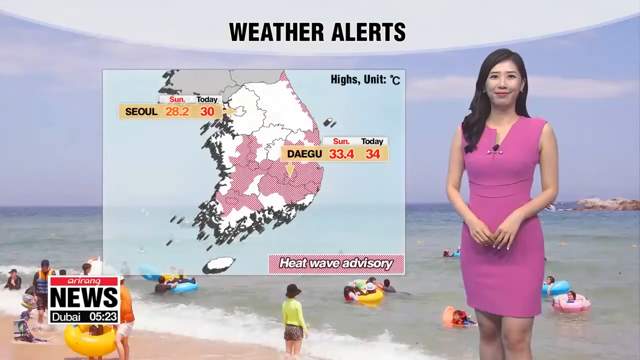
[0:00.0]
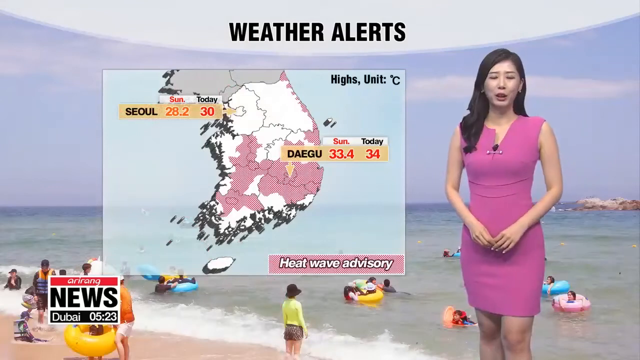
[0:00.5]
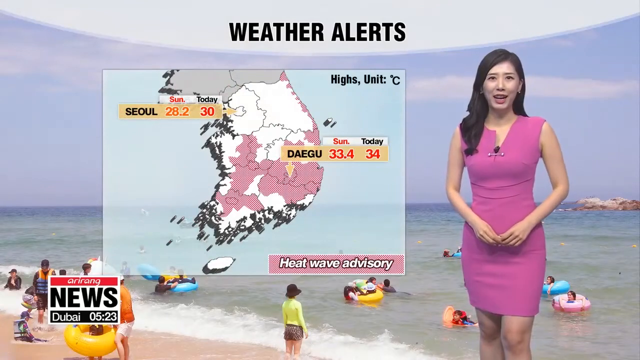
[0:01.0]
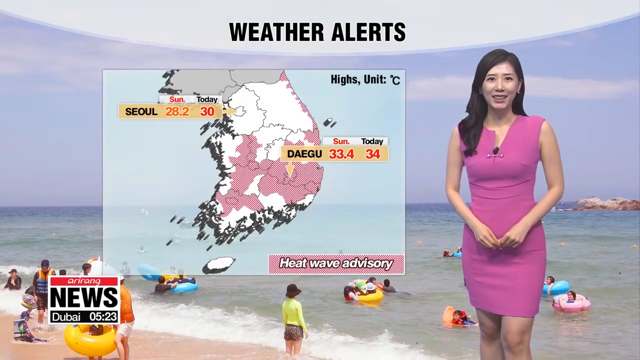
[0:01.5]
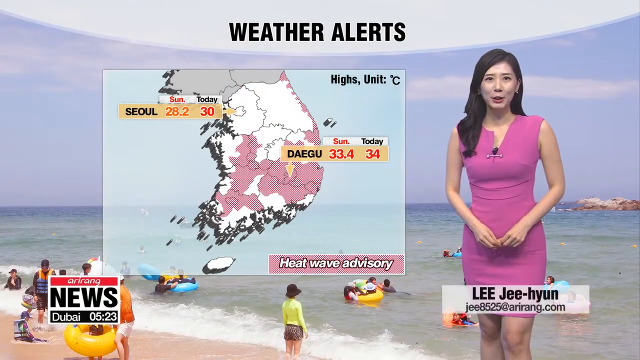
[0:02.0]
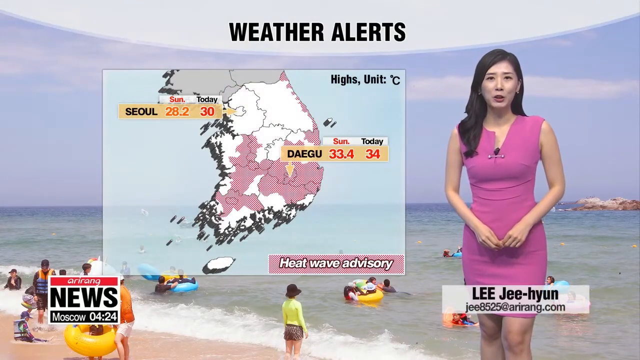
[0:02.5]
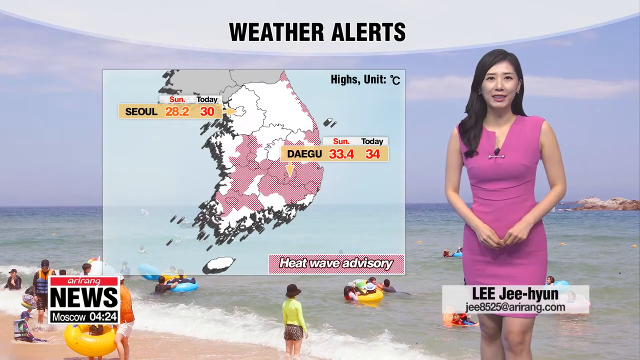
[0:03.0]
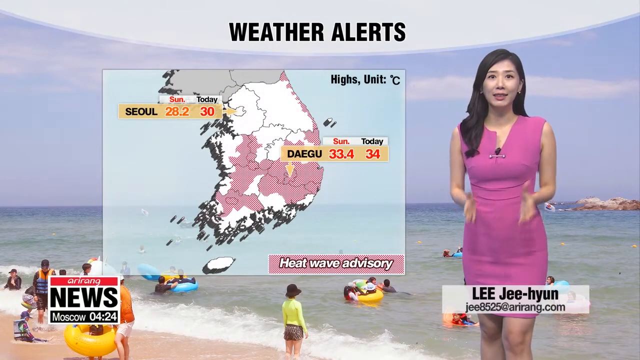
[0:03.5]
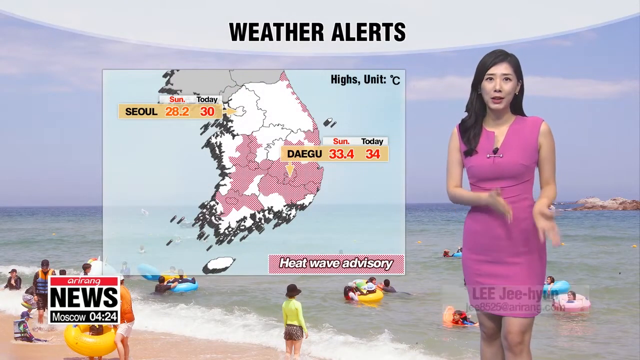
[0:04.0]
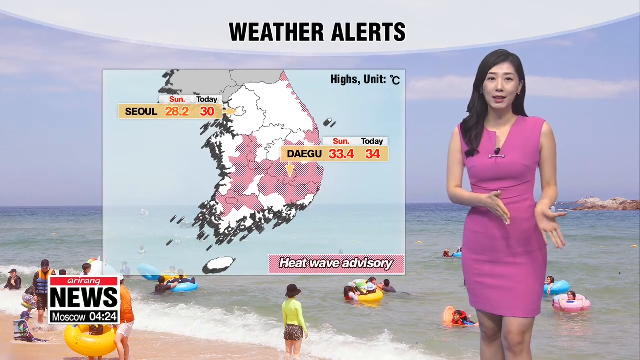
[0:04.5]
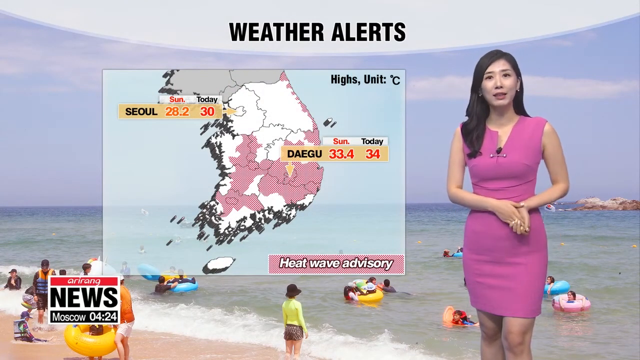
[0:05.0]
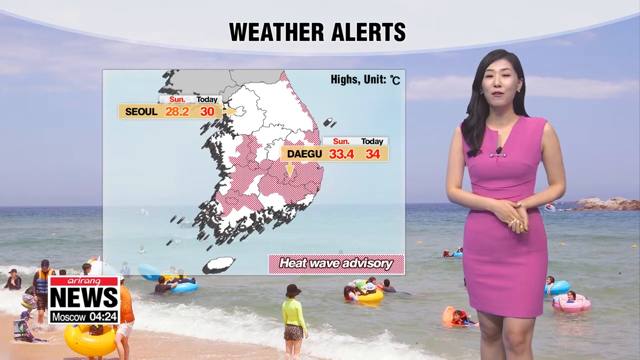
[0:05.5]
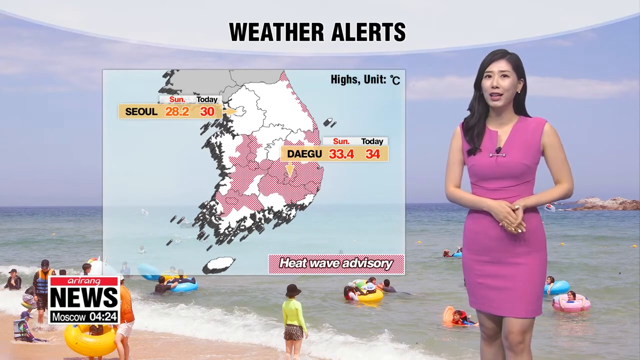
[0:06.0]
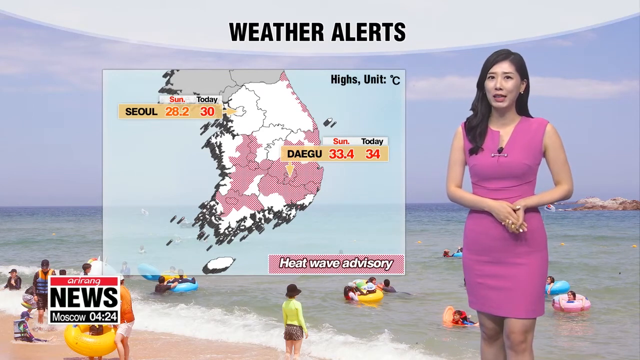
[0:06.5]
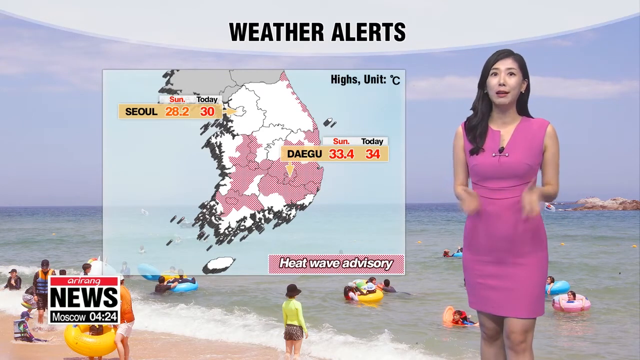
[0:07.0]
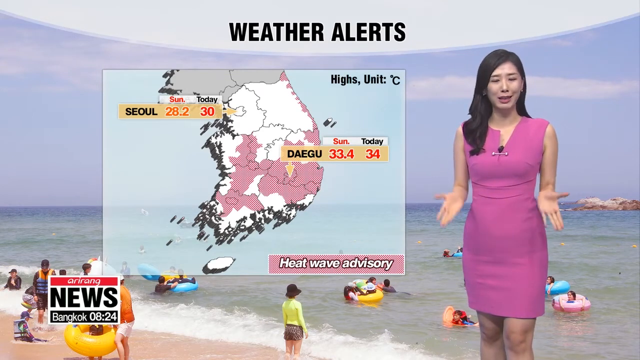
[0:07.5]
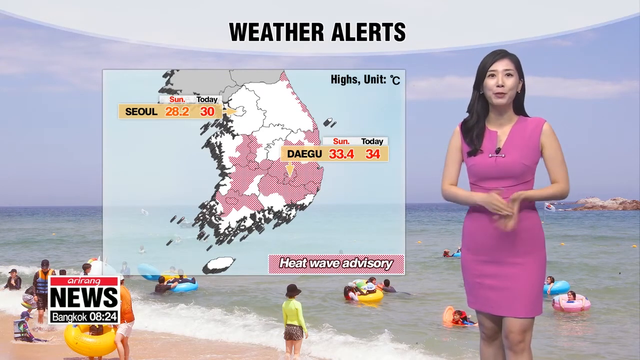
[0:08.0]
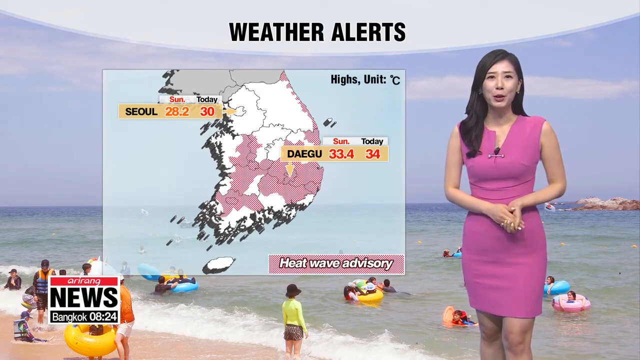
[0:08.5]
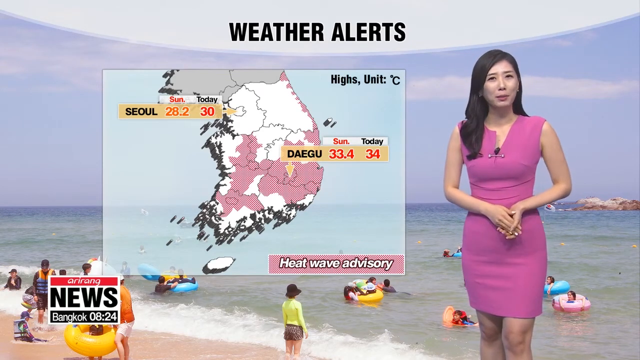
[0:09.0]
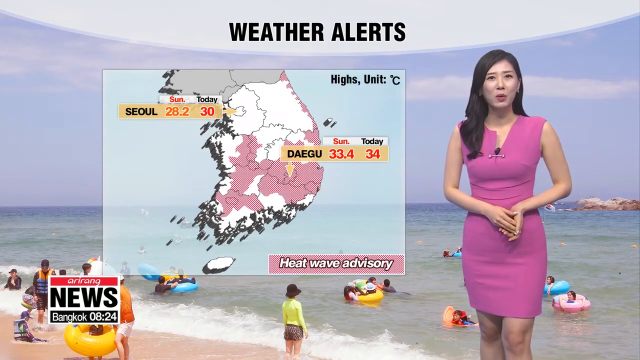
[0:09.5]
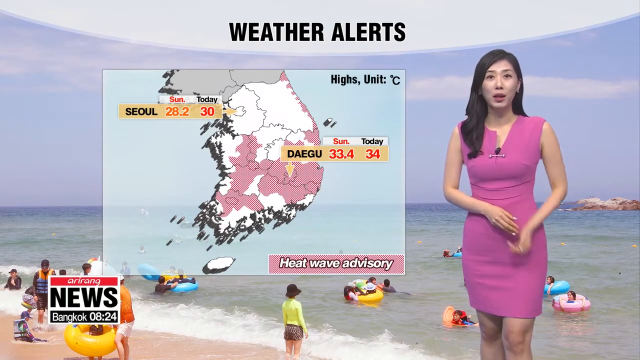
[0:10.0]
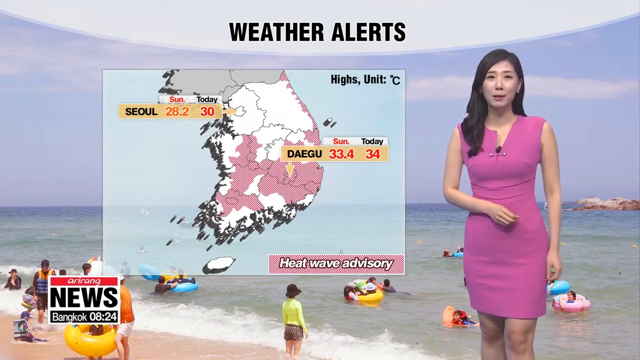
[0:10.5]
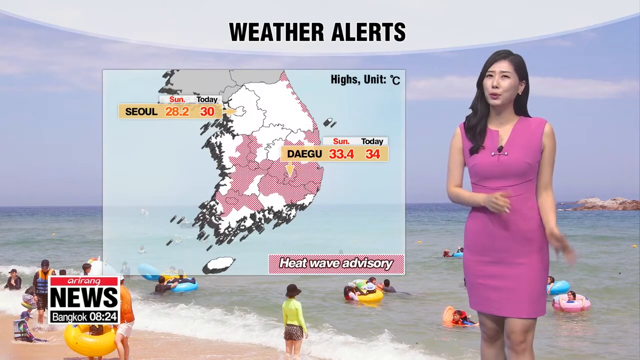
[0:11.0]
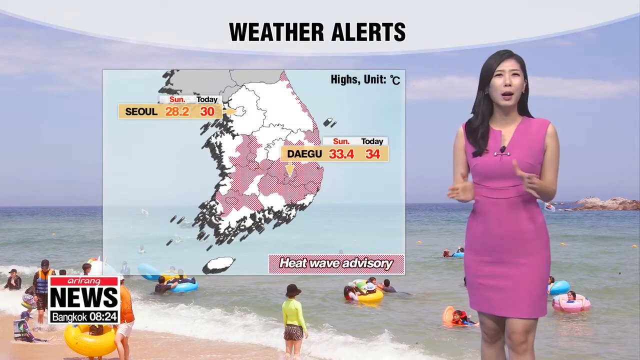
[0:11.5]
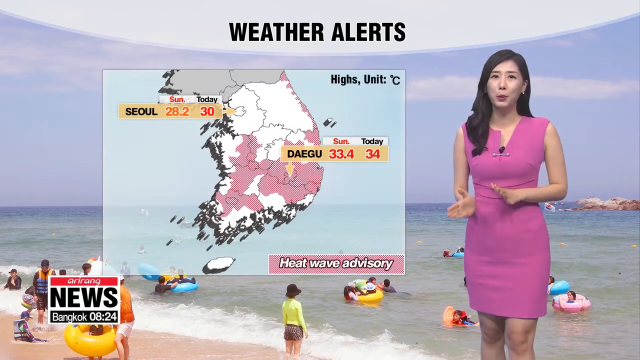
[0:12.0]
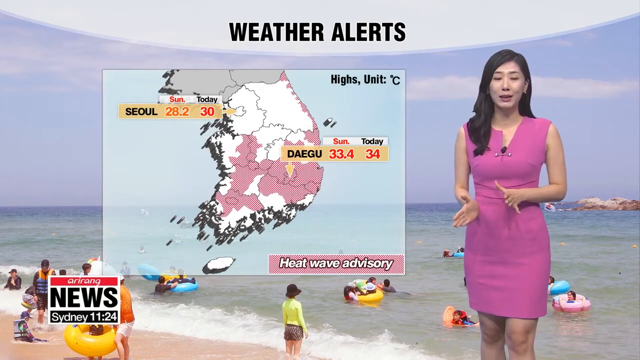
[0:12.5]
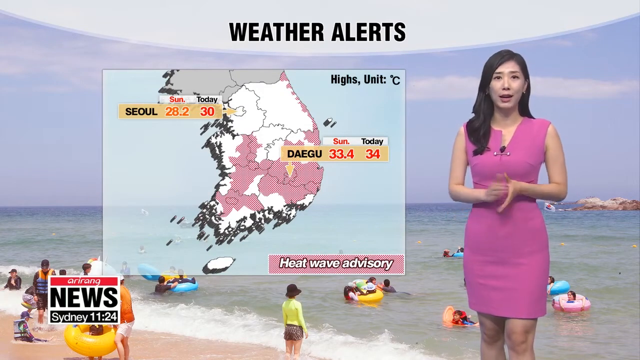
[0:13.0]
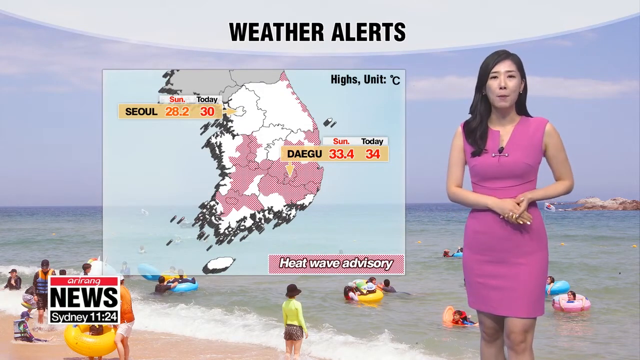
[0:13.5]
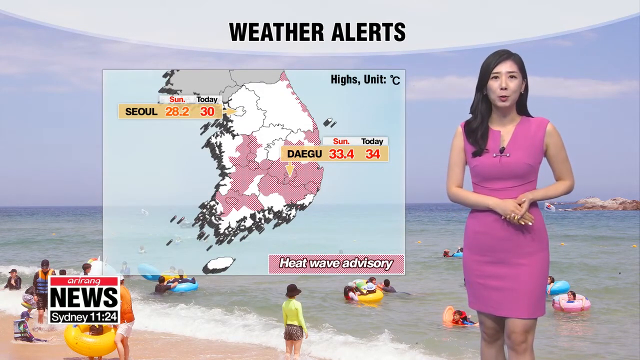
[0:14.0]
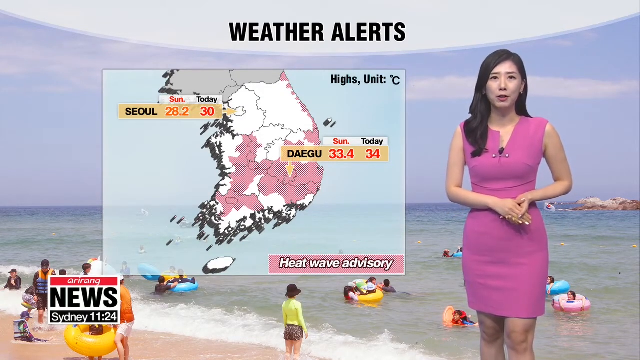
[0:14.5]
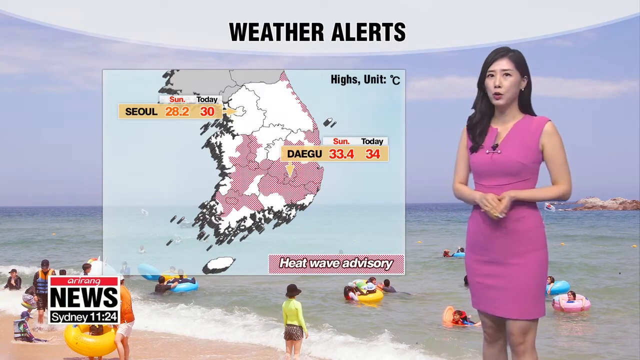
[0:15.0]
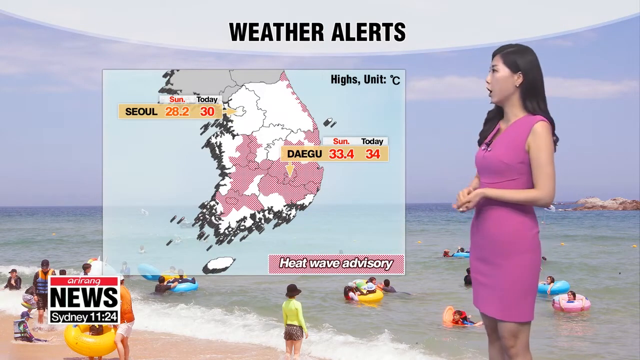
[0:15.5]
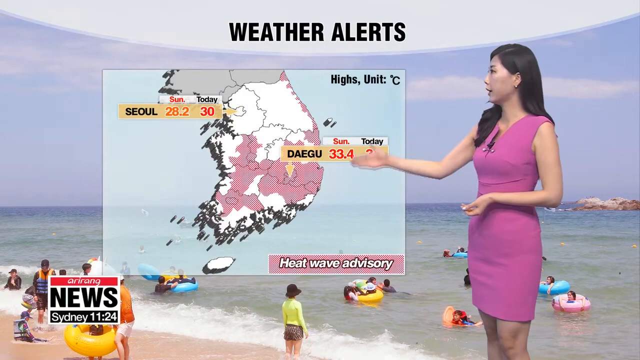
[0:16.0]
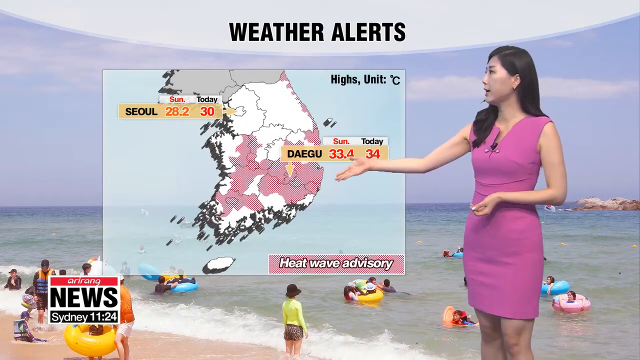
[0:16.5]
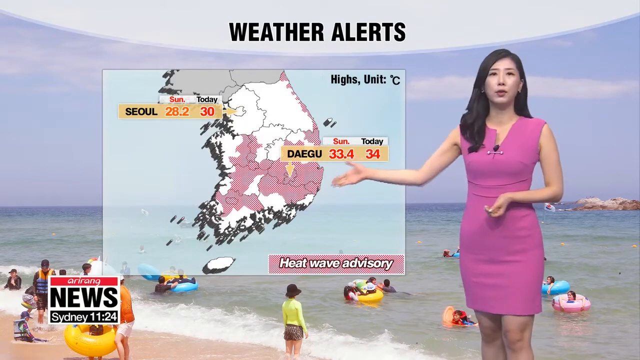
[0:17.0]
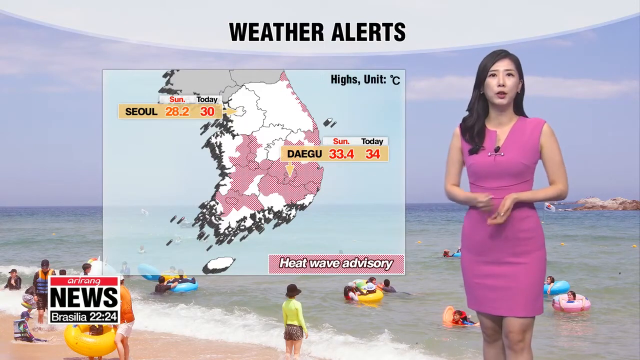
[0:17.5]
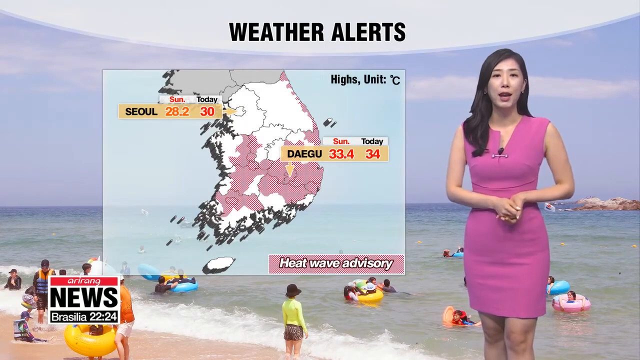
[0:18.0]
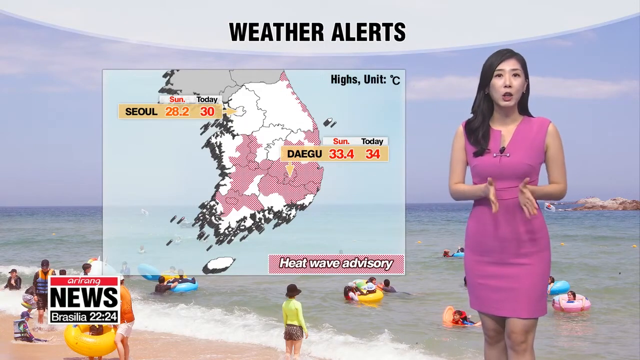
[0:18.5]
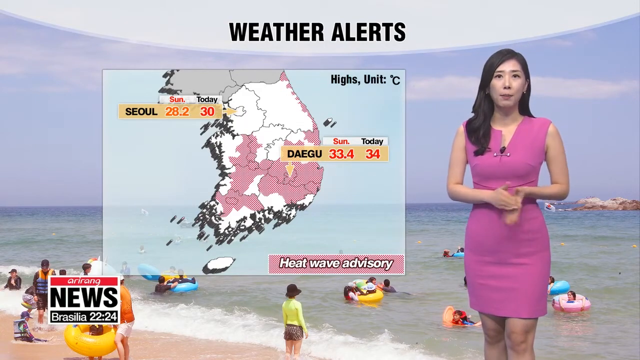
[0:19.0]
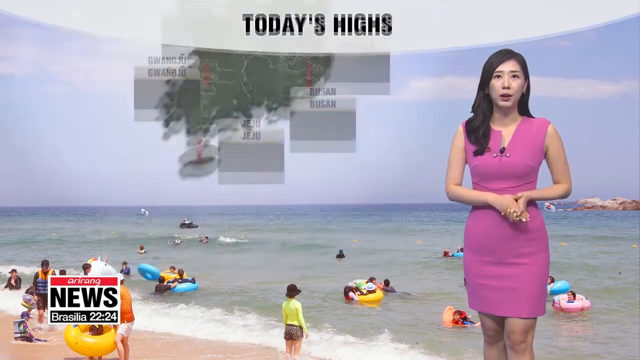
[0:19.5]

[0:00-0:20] A woman with long black hair wears a short pink dress with a mic attached to it. She stands next to a screen showing the heading "weather alert" in bold black, along with a map displaying different temperatures over different areas. The background shows people at a beach, some swimming, some walking, and some in life jackets. She talks while using hand gestures and facial gestures, and points at the screen with her right hand. The weather alert concerns a heatwave, and some areas on the map look like they will experience it. A news logo in the bottom left corner of the screen identifies this as a news channel.